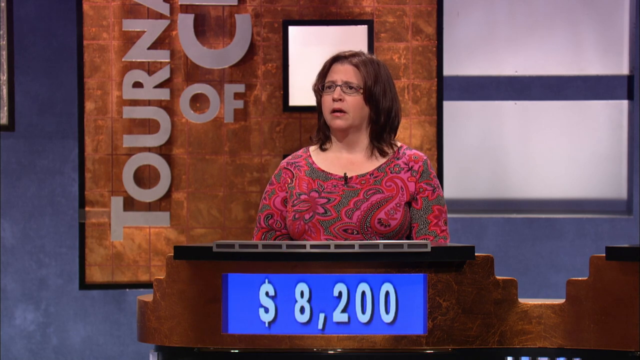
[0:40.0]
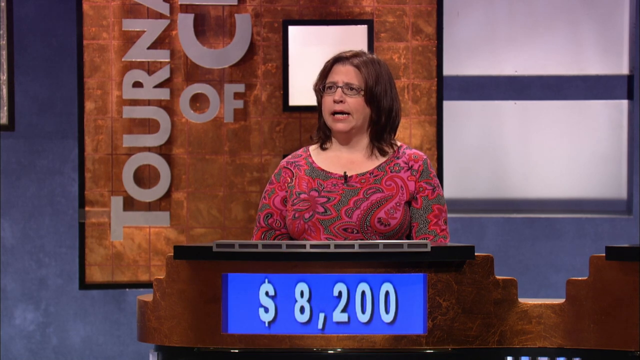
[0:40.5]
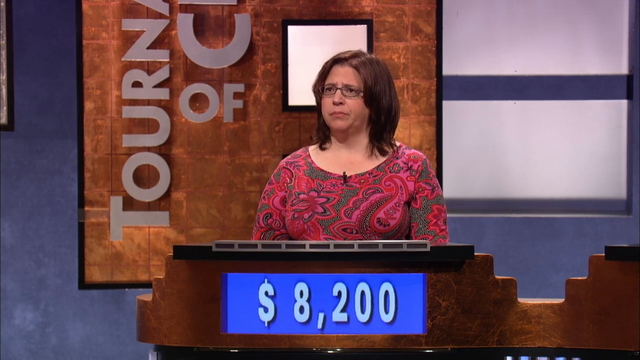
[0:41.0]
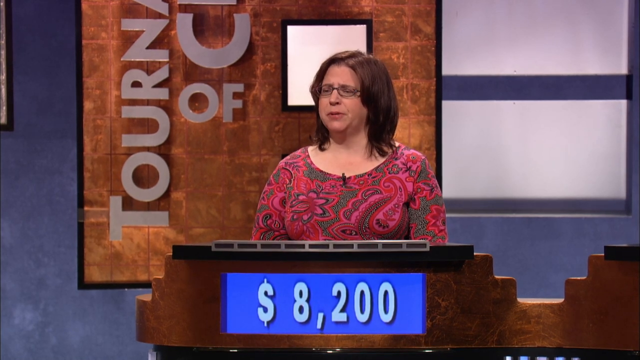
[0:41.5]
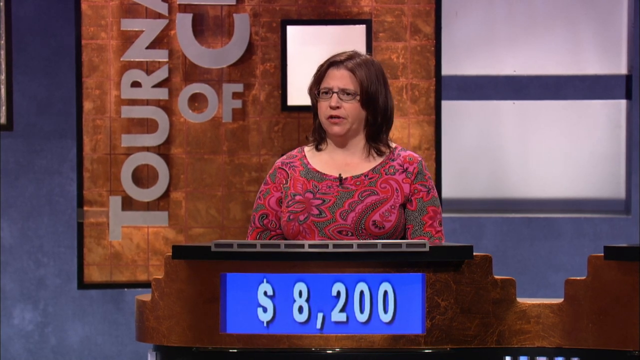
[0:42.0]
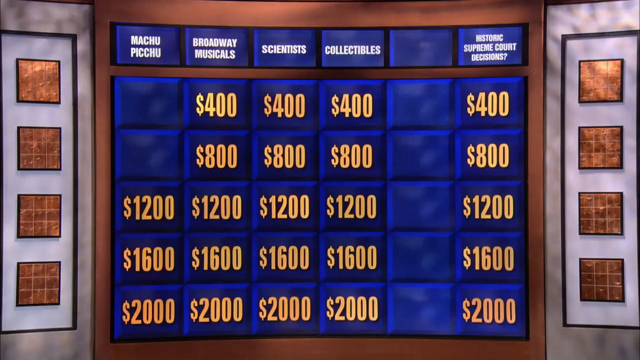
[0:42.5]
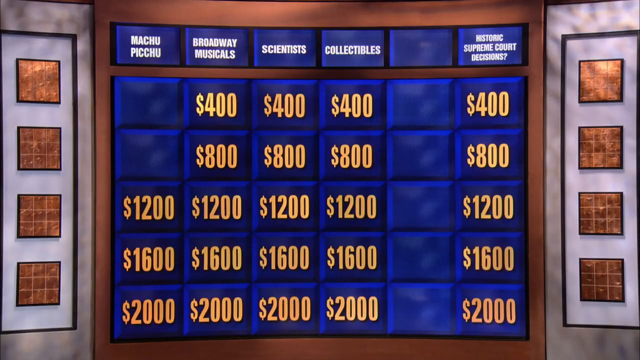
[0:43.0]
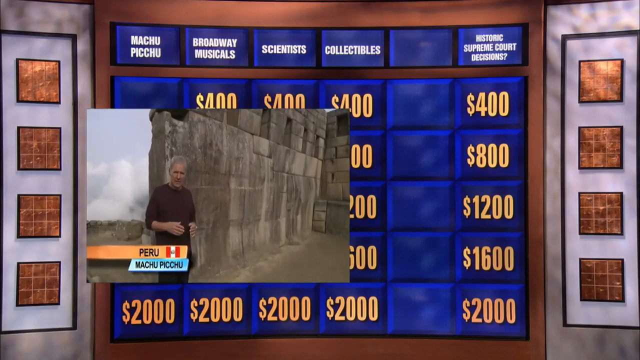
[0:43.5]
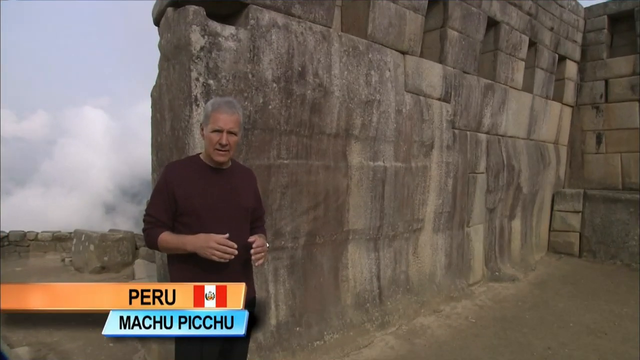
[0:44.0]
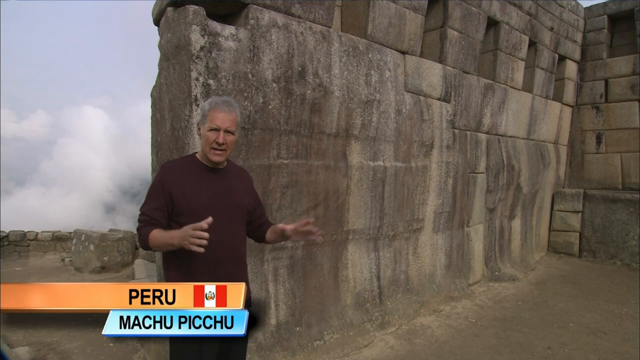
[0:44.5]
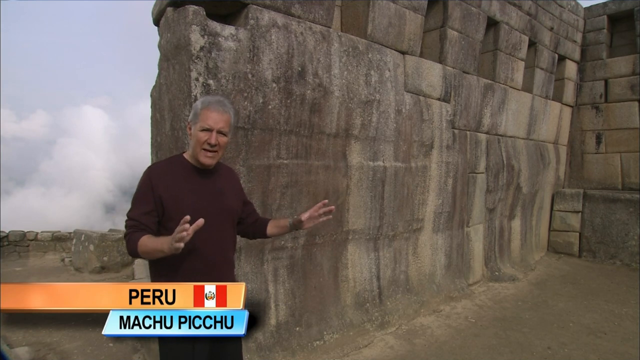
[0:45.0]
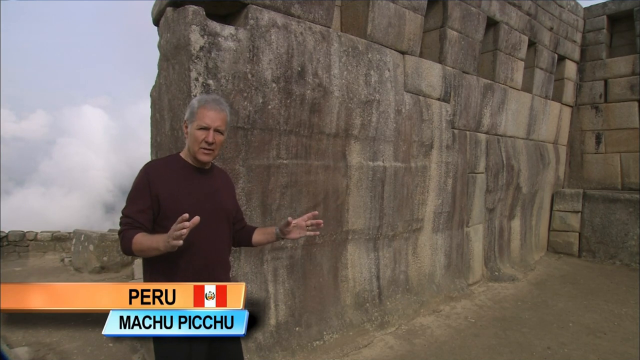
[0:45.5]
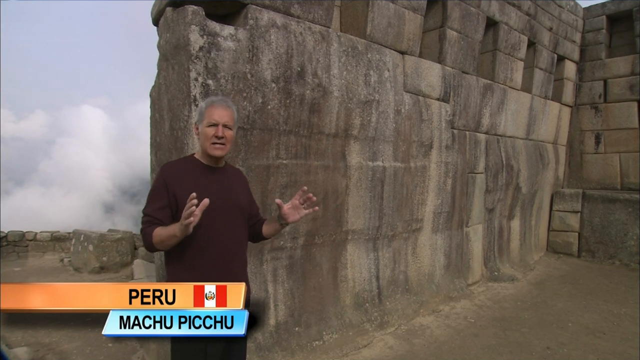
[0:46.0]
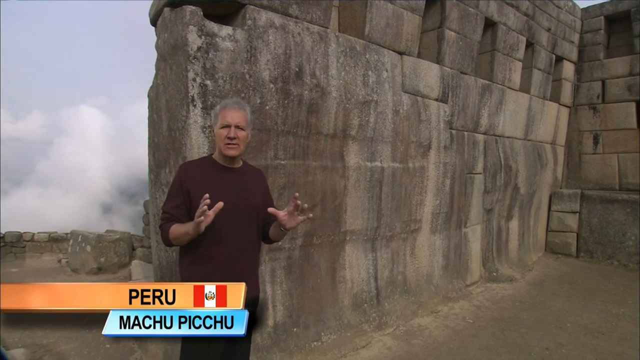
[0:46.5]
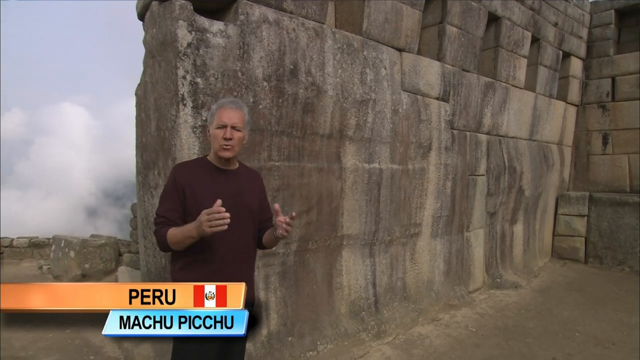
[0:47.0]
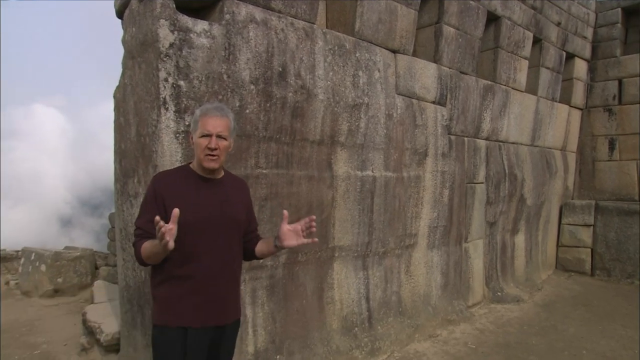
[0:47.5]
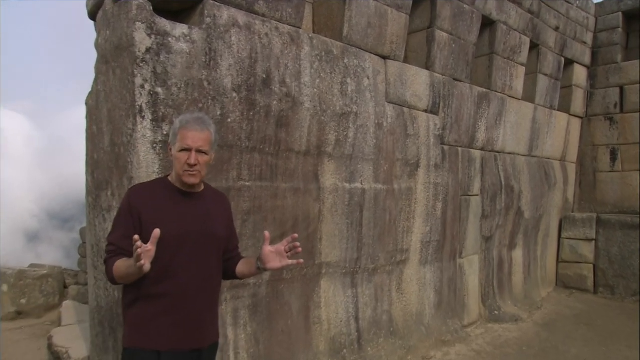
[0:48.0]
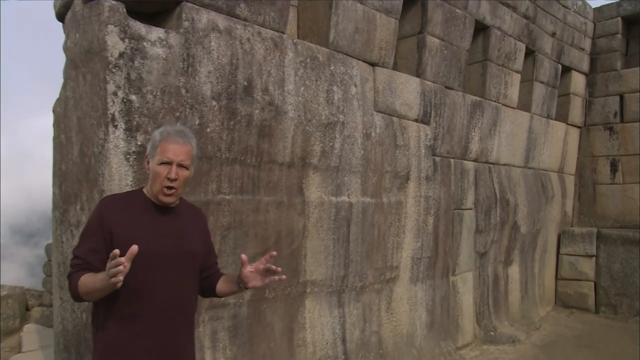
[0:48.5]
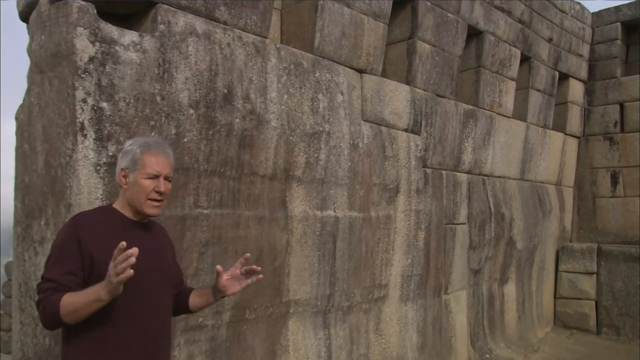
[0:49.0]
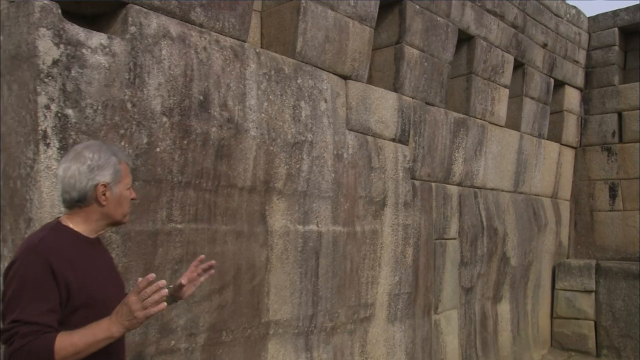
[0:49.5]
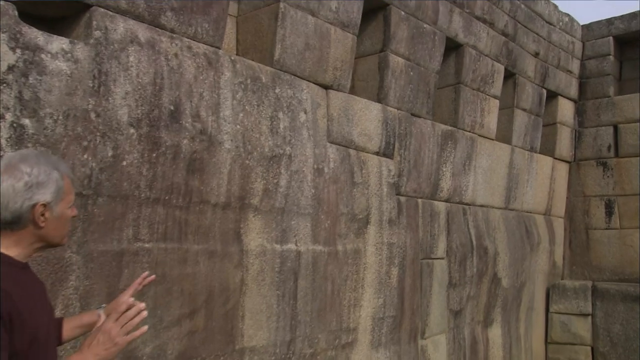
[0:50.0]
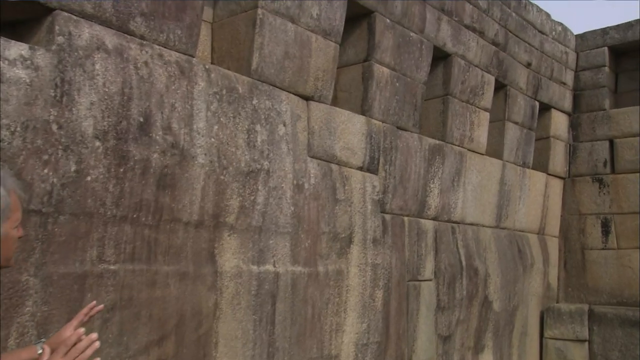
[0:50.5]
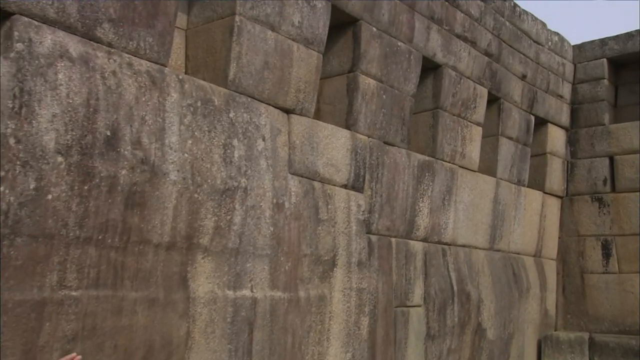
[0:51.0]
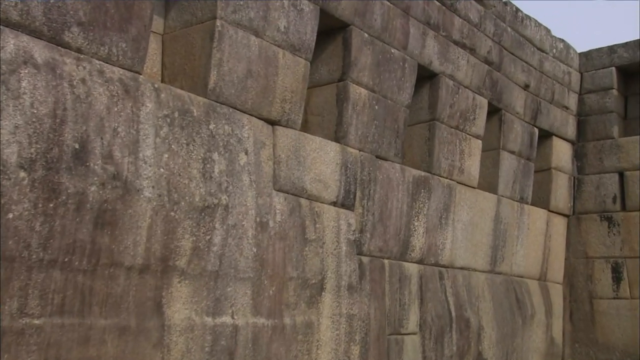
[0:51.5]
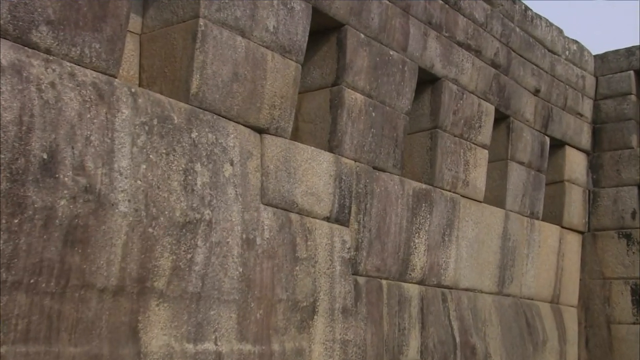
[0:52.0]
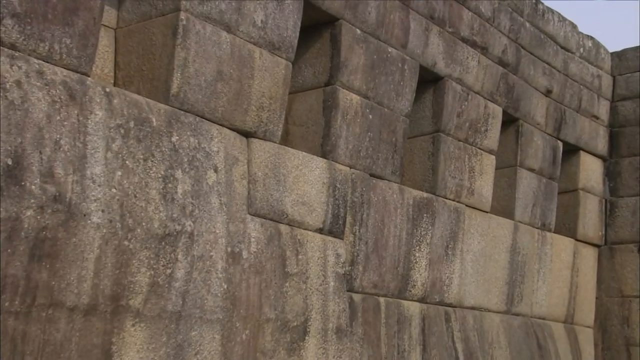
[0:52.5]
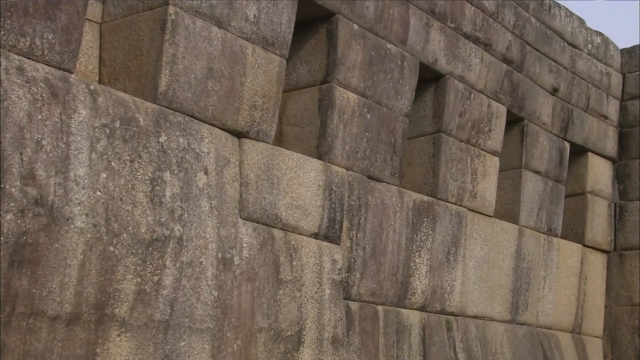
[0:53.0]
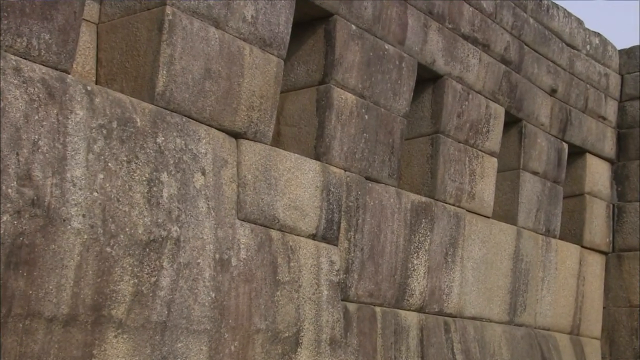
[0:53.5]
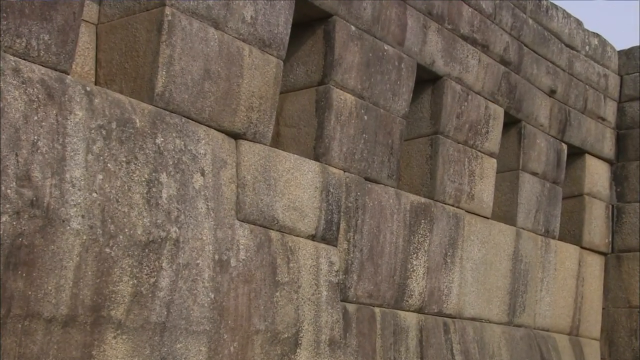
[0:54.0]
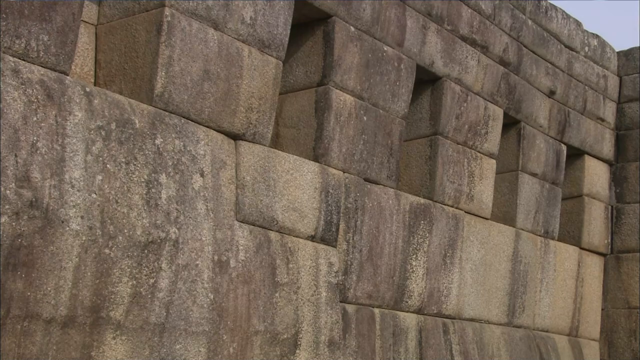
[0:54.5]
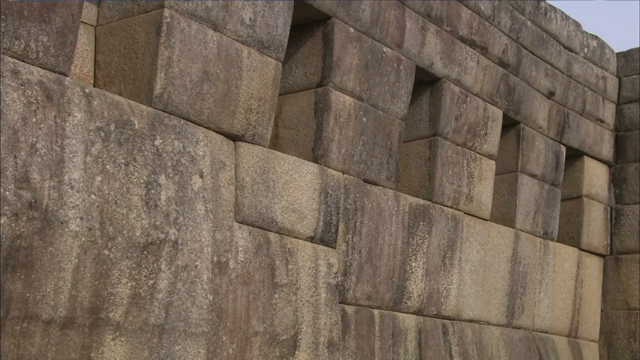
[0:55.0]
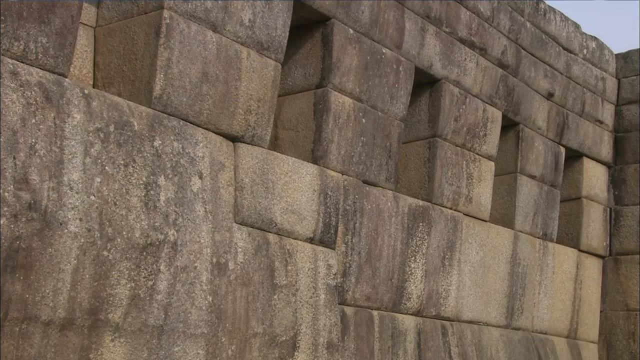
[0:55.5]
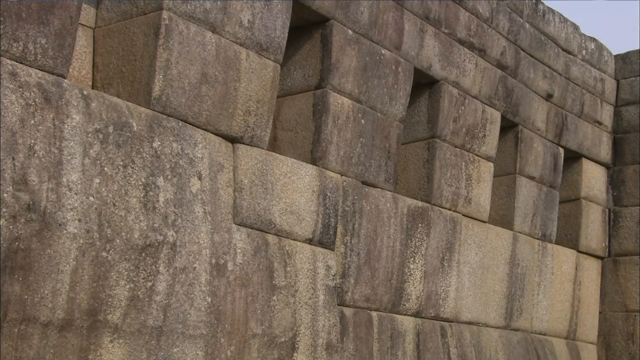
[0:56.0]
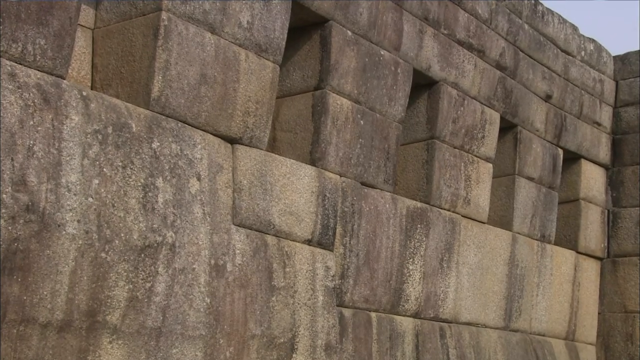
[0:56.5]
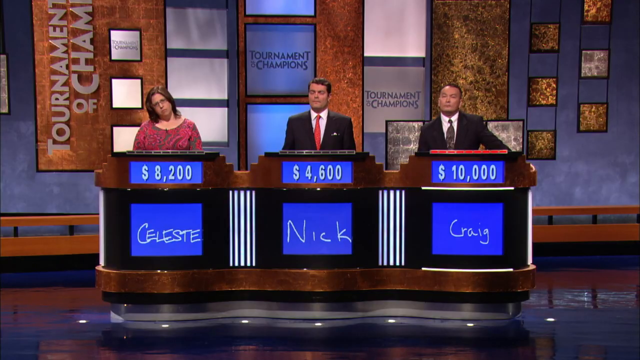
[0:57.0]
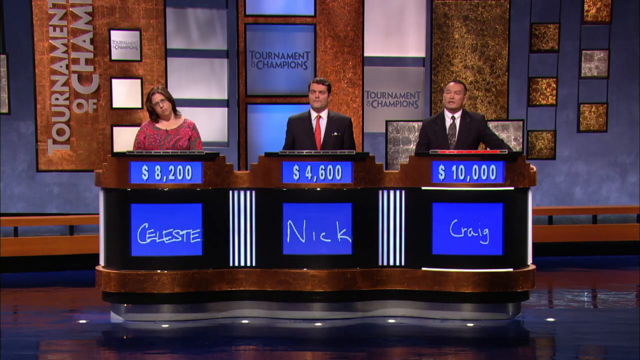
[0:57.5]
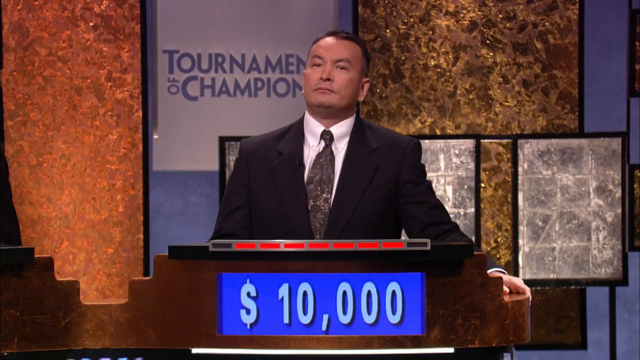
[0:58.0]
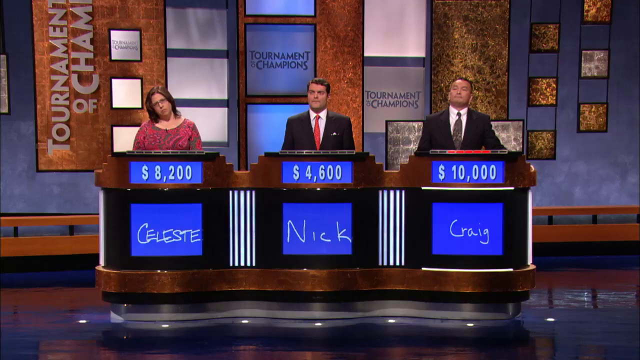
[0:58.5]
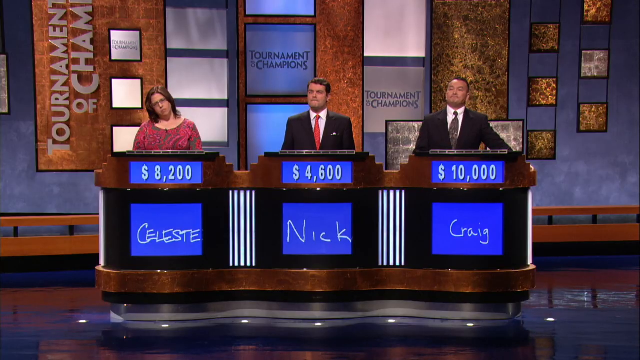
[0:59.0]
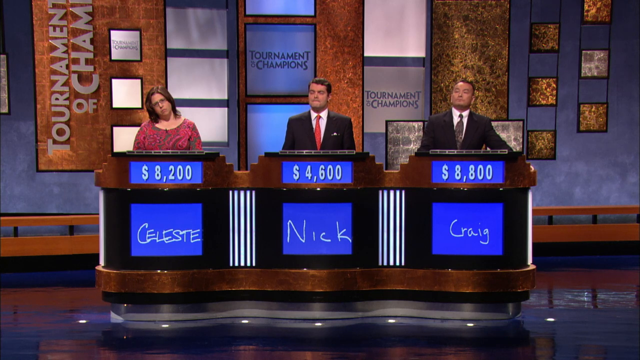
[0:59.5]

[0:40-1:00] The woman's score goes from 7,400 to 8,200. She seems to like order, picking clues from top to bottom, and chooses the third one. In Peru again, Alex Trebek is back in the same shirt, with the same cut line at the bottom, kind of standing on the wall. The wall looks like it needs washing, with brownish areas right above him; to his left it looks a bit cleaner, with streaks, and is slightly porous. As he comes up, there are big blocks with seams between each one, and openings. He holds his hands out as he speaks. The camera zooms in, and he turns and looks up at an opening. About four different openings are visible. The focus then shifts to Craig as he starts to answer, while the red meter drops one section each second. He seems to think he knows it, but points are deducted: he goes from 10,000 down to 8,800, a loss of 1,200. He is still in first place, but only by 600.